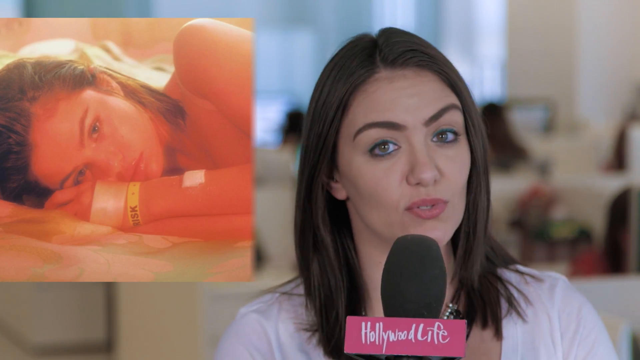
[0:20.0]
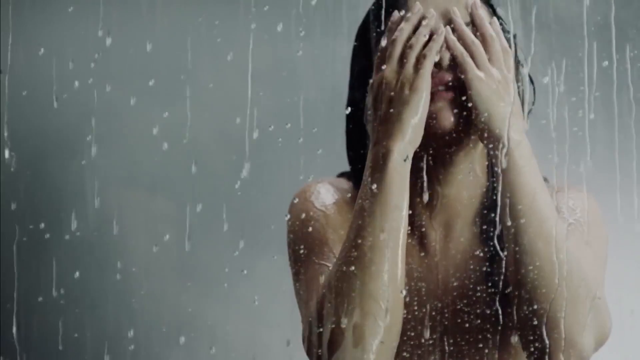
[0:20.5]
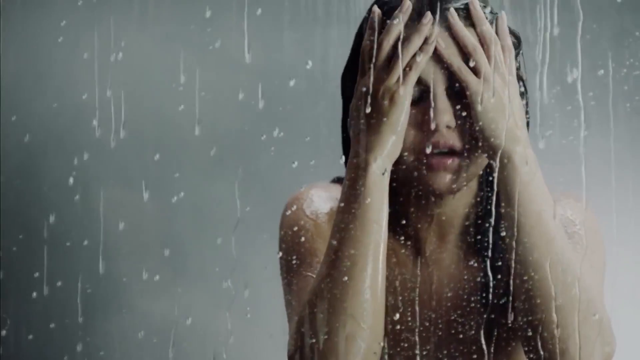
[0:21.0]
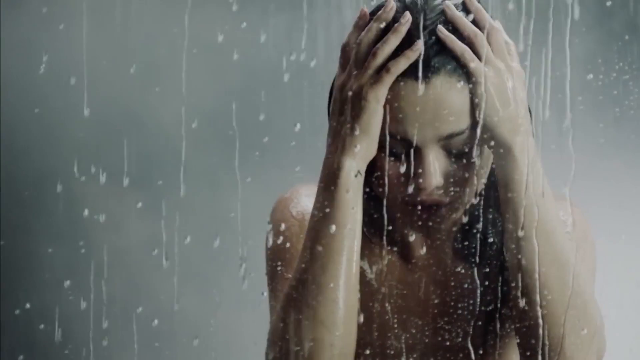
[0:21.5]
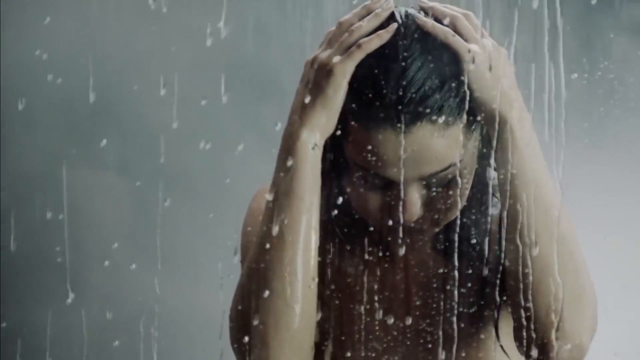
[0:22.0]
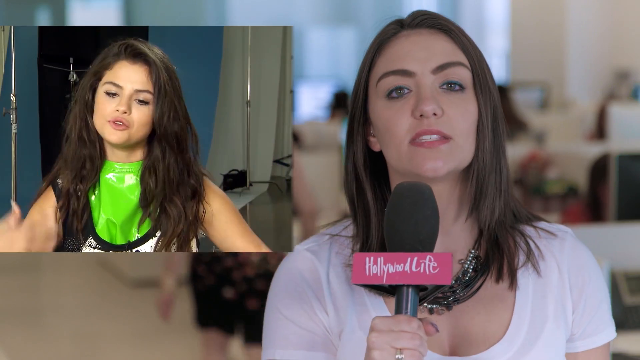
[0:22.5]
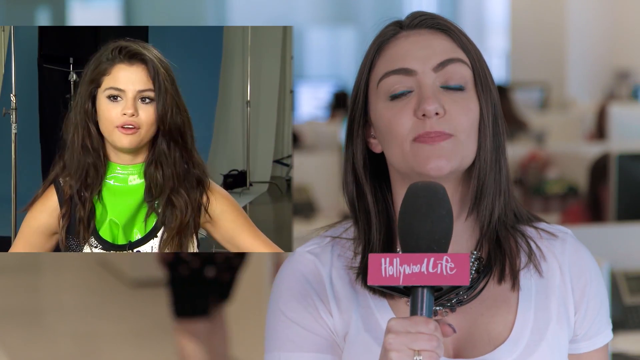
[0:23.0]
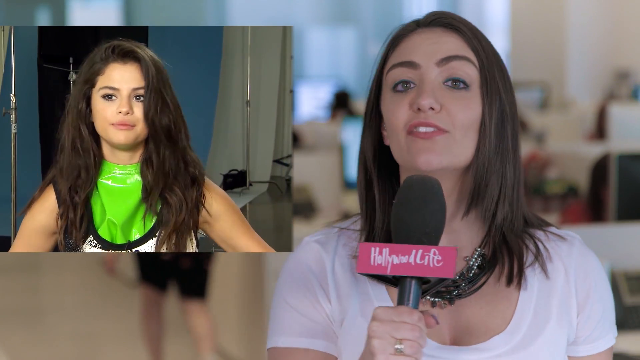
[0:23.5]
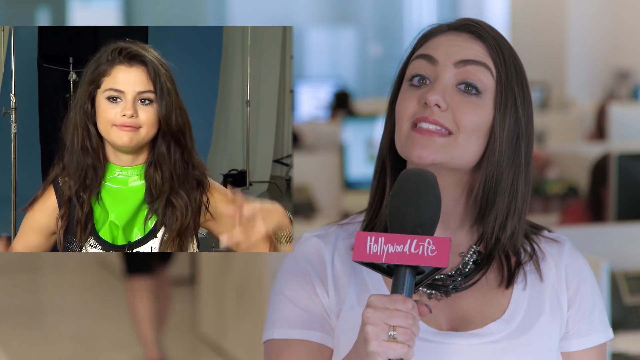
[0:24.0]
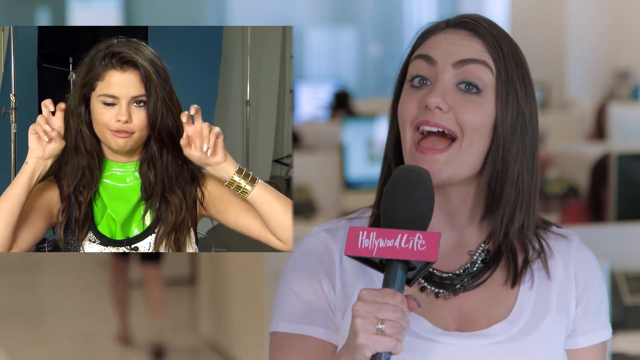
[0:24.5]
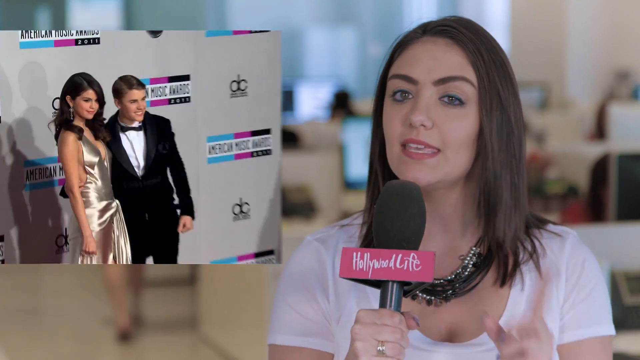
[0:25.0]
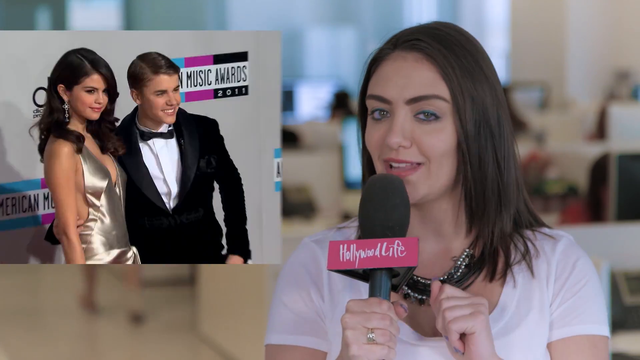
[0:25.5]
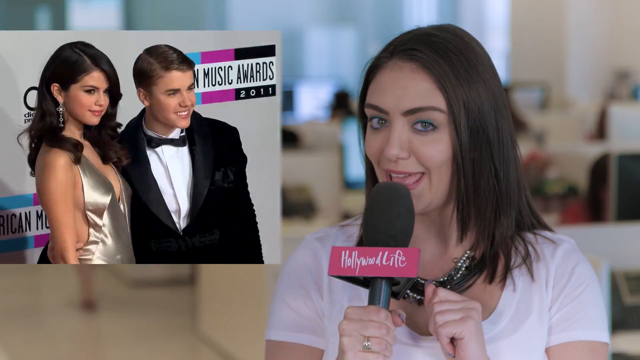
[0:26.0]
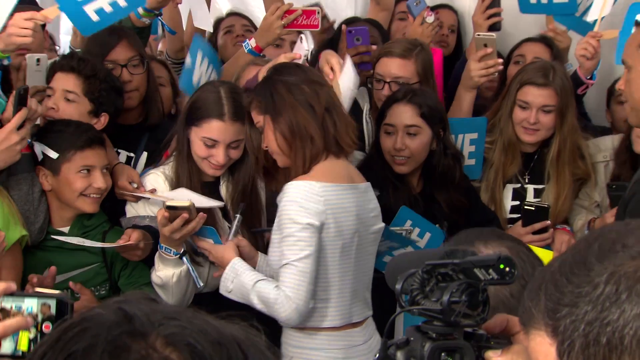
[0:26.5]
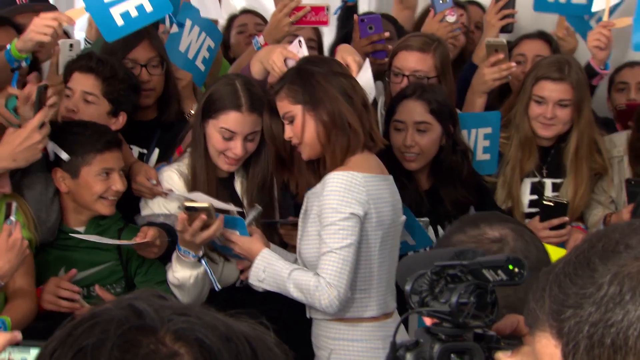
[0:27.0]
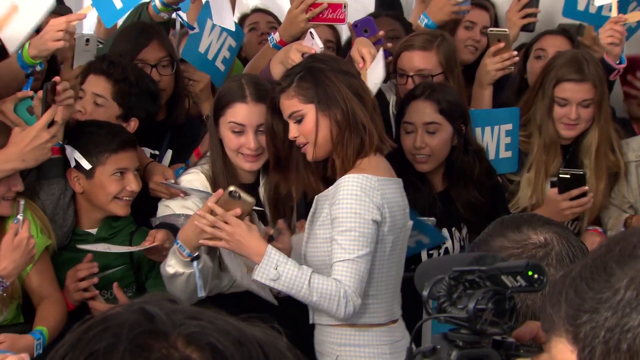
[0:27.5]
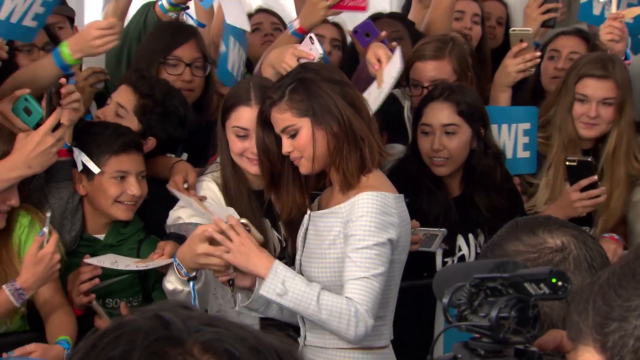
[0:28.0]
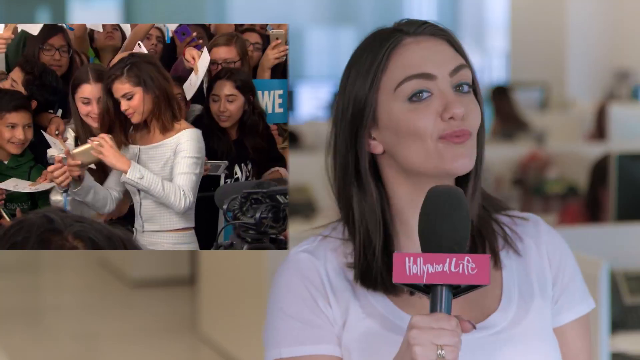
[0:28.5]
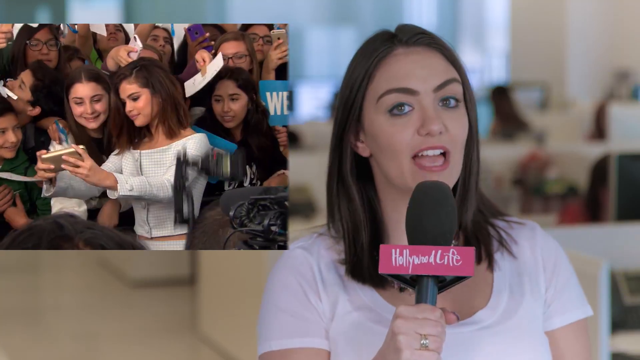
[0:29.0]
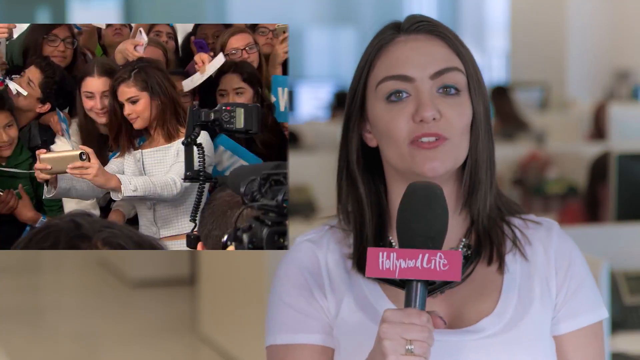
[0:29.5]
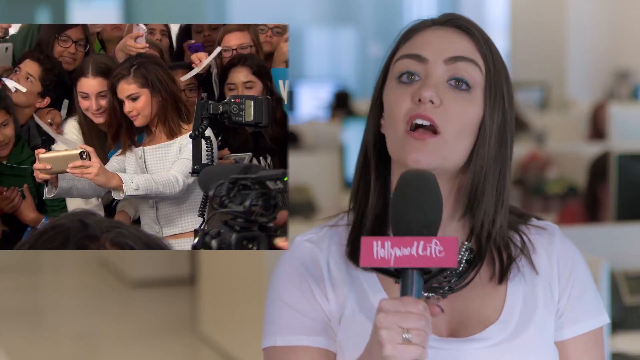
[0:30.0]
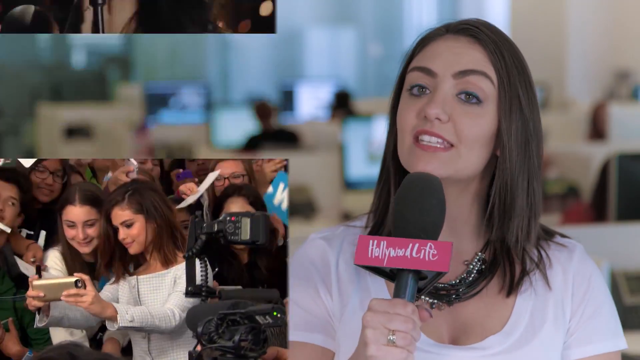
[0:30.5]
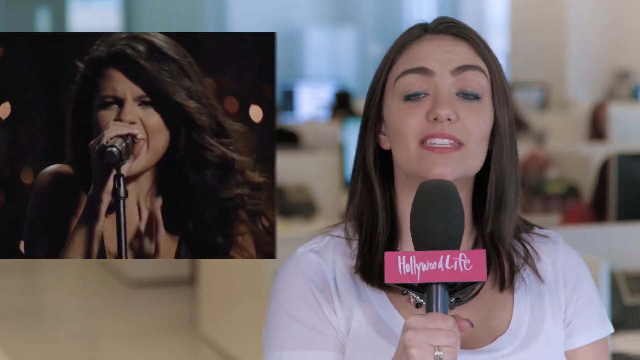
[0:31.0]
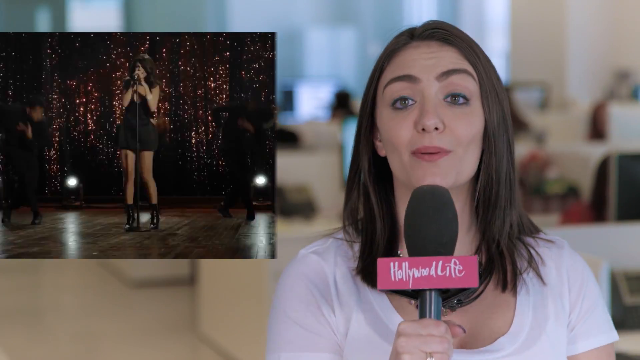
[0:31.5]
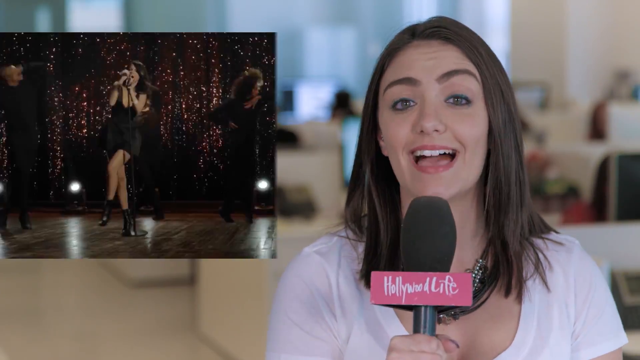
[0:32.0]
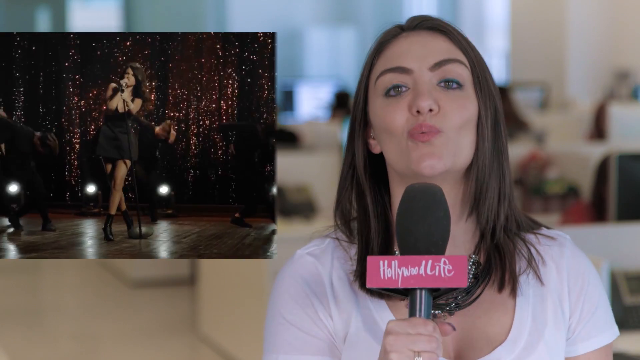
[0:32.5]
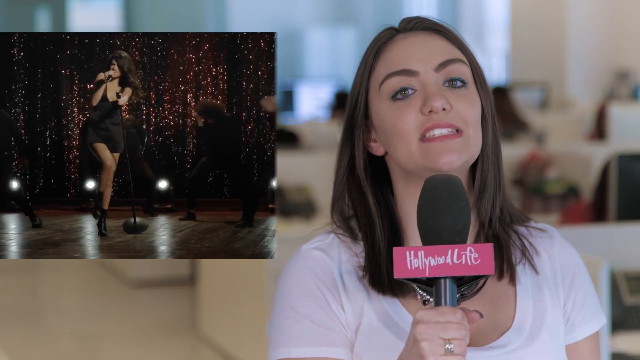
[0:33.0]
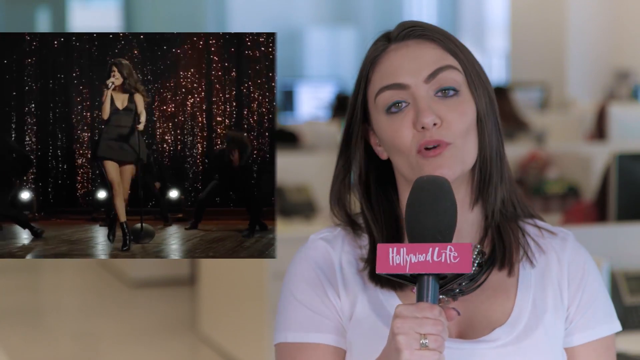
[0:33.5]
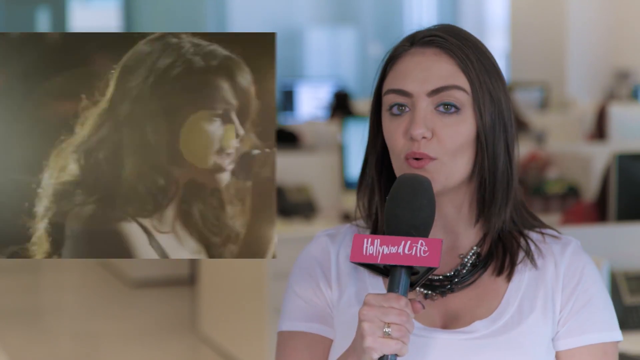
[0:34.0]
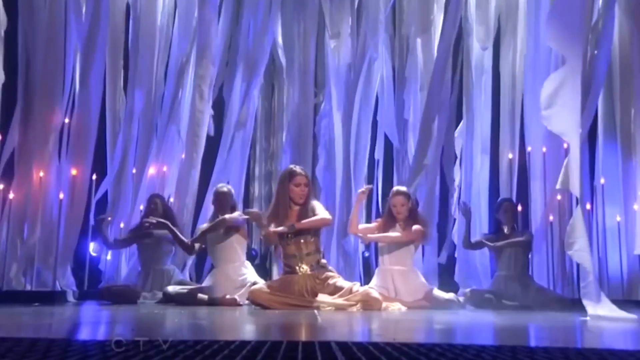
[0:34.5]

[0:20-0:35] The reporter from Hollywood Life holds the microphone and speaks toward the camera, quite animated. To the left of her is a superimposed video of Selena Gomez speaking. Another video then appears showing Selena Gomez signing autographs, followed by another of her on stage in a music video, and then a full-screen shot of her in a music video.